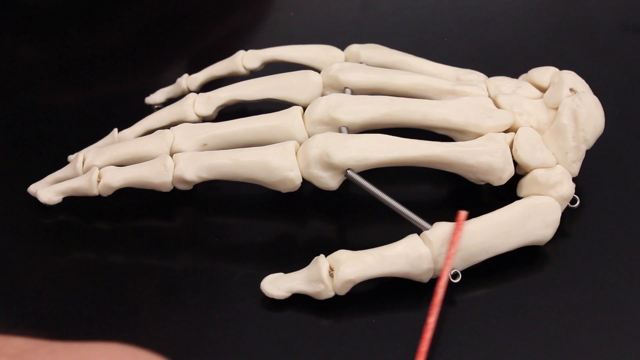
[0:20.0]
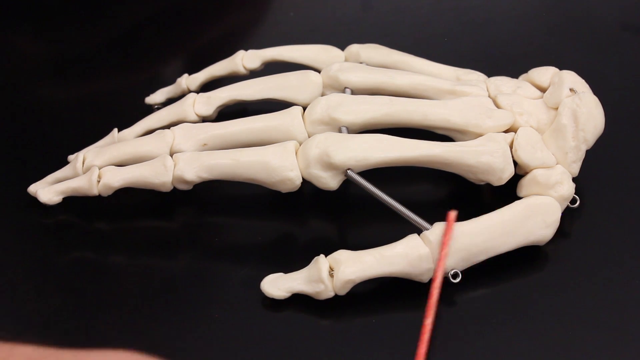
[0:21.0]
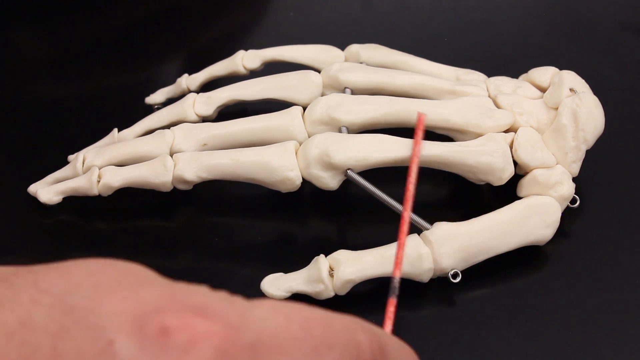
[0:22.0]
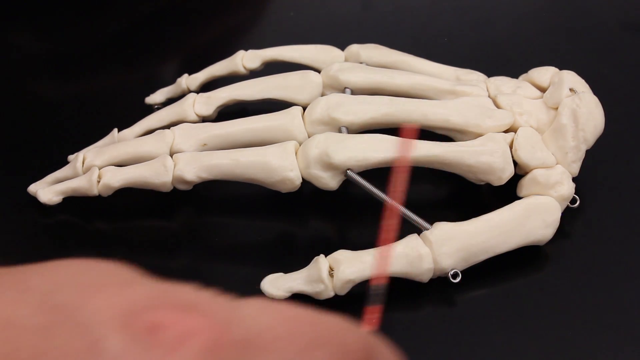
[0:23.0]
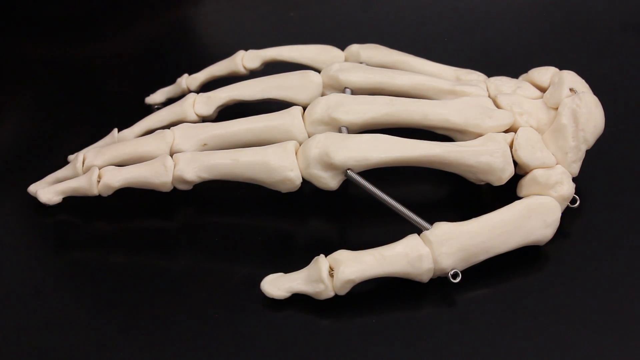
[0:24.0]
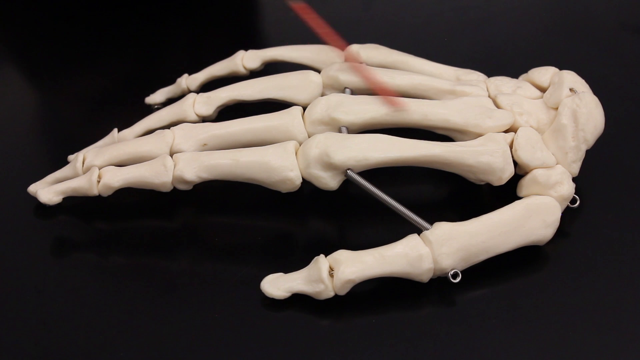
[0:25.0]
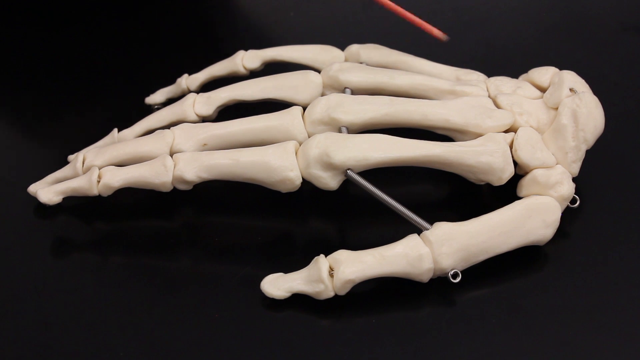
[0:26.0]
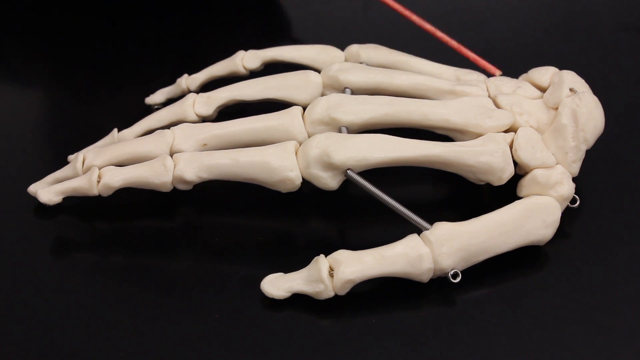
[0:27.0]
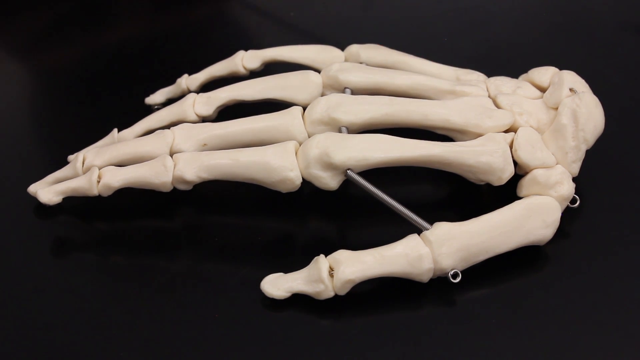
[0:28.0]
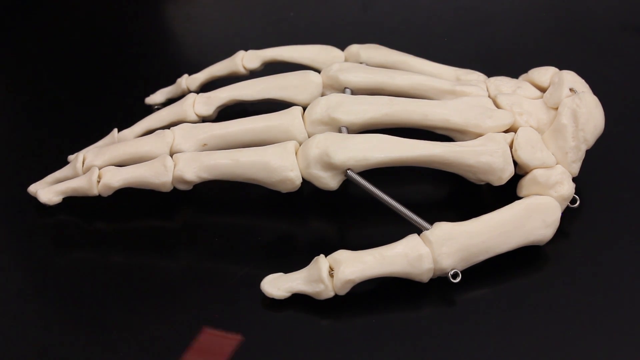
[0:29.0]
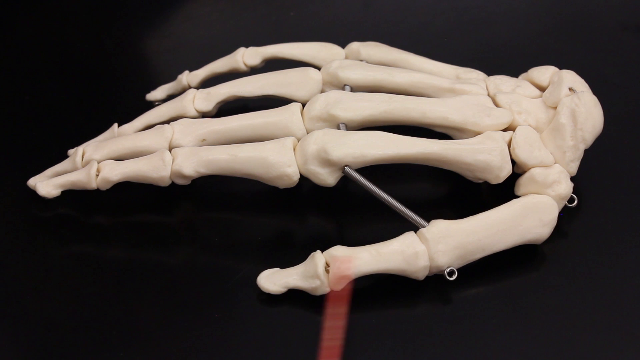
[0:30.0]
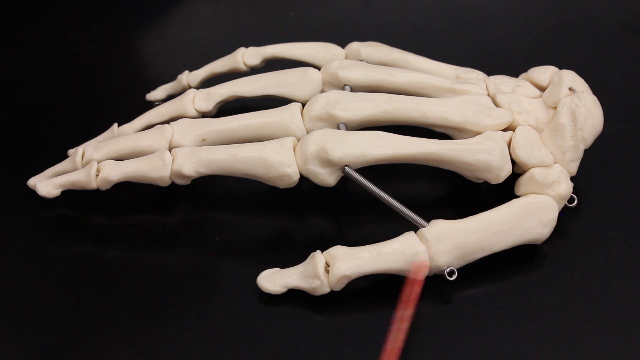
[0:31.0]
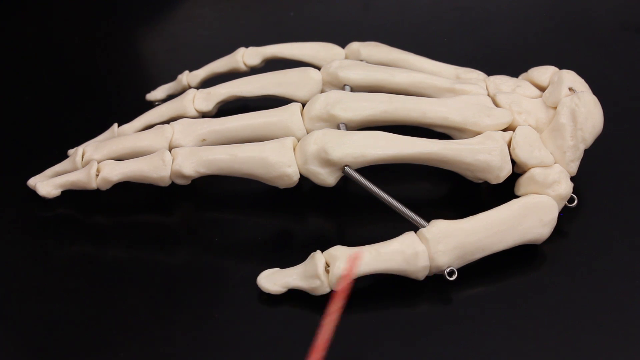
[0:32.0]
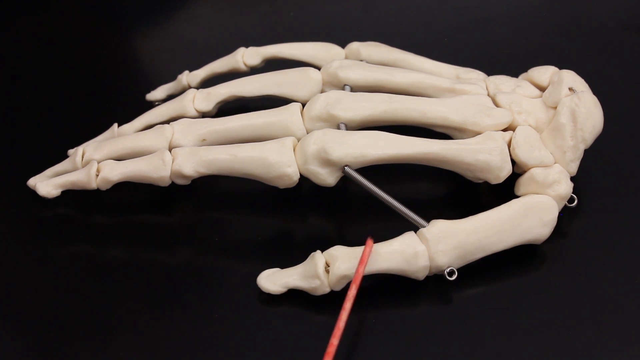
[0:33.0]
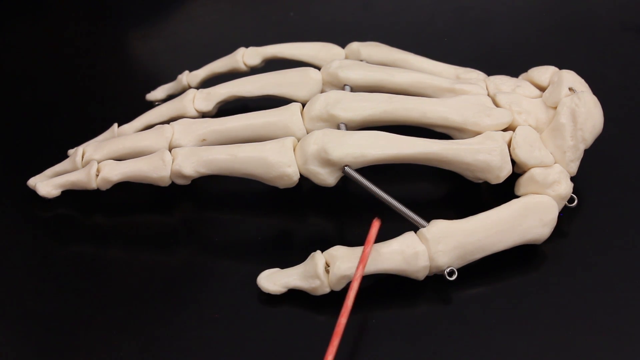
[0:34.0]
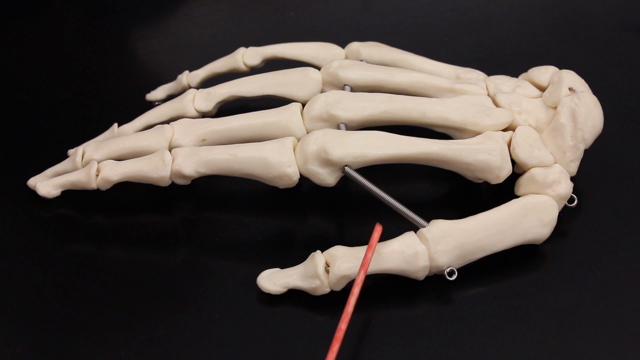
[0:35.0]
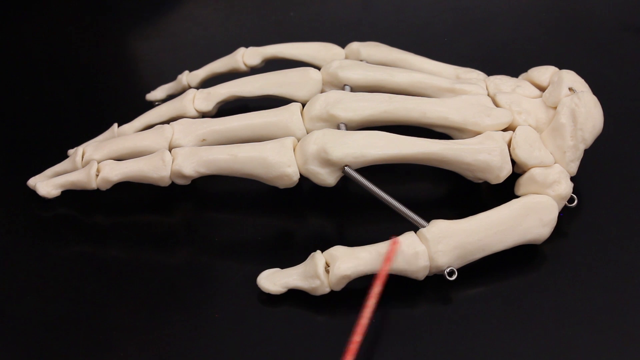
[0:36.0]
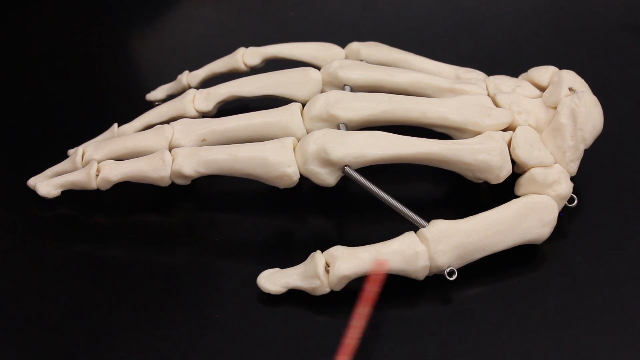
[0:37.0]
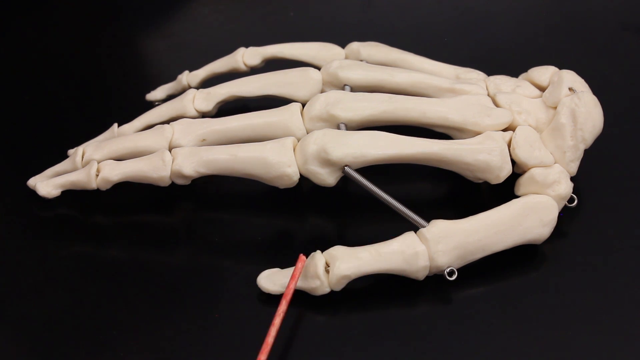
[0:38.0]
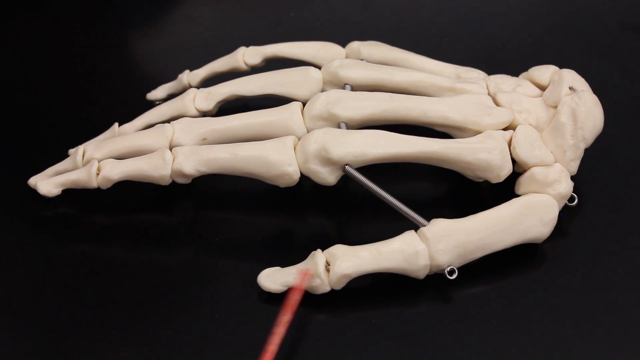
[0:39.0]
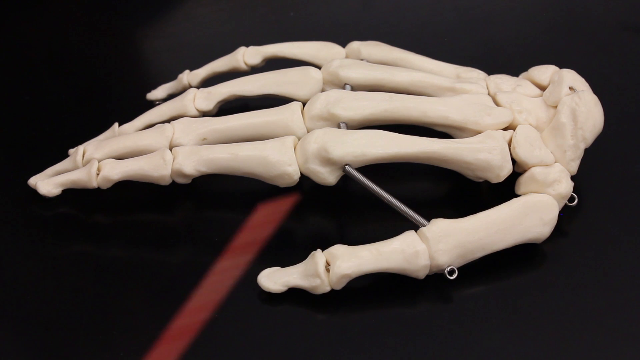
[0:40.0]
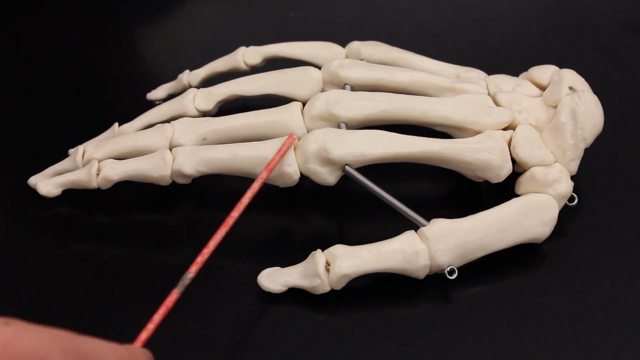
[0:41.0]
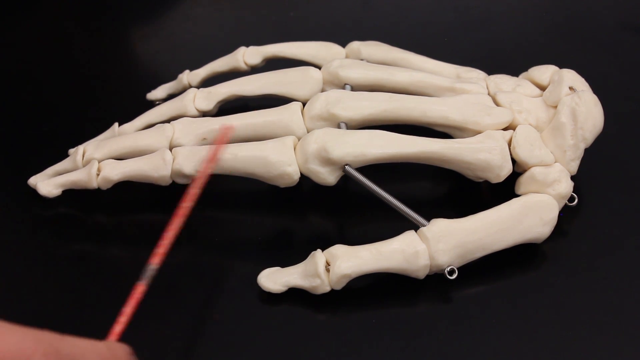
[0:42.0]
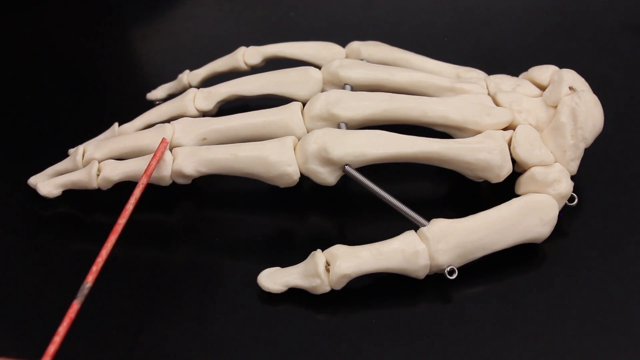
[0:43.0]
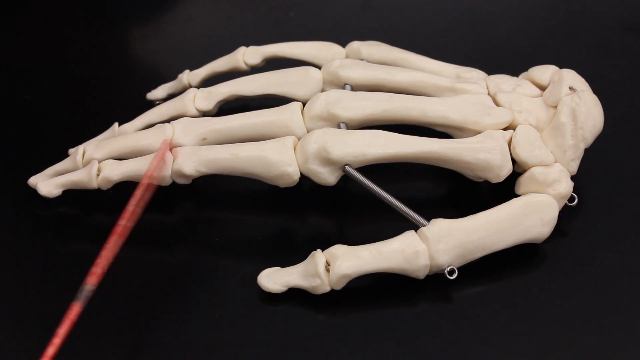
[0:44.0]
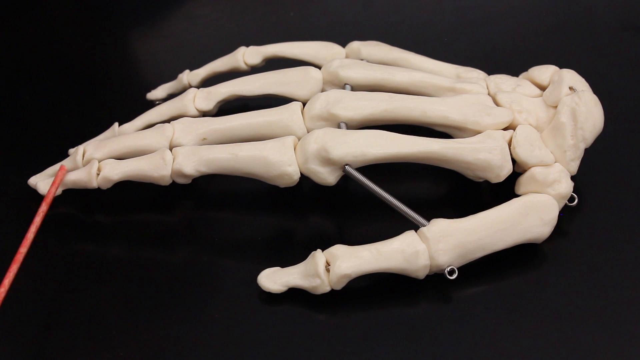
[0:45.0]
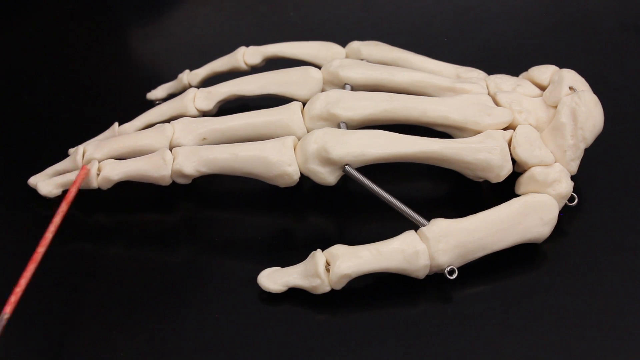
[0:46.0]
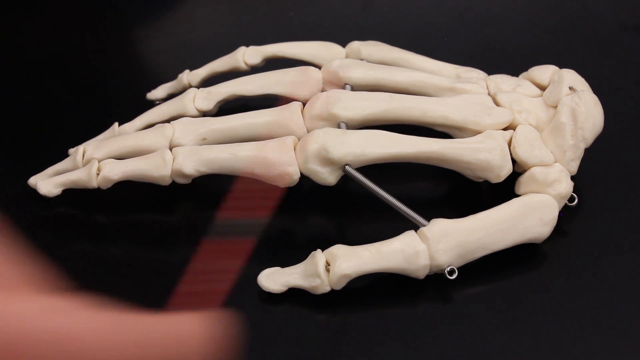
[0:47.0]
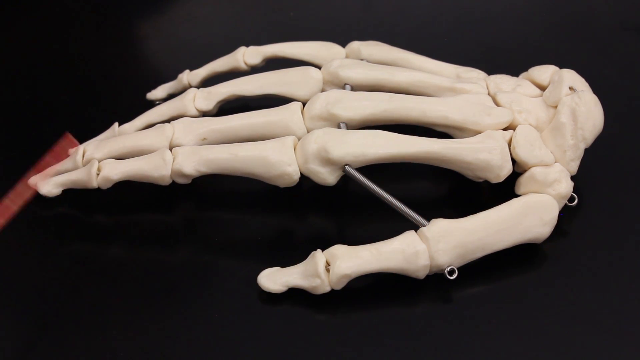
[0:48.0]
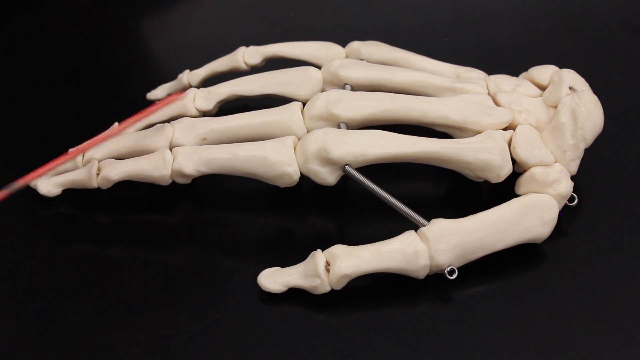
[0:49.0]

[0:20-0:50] A model of a human skeletal hand, a right hand, rests on a black surface. Its bones and joints are connected with metal rods with small hooks on the edges of the bones. A pink wooden stick comes from the bottom center of the screen, pointing toward and rubbing the thumb bones. The sleeve of the person holding the stick occasionally appears in the bottom left corner as they move the stick back and forth, and then their hand takes up the entire bottom left corner. It seems to be their left hand gripping the stick, and they start pointing the stick at the index finger bones. They move around the surface so the stick now comes from the top center, rubbing it against the middle finger bones, then moving upward to rub the ring finger bones, and upward again to rub the pinky finger bones. Then they go around the table again and start rubbing the stick against the thumb bones of the model.